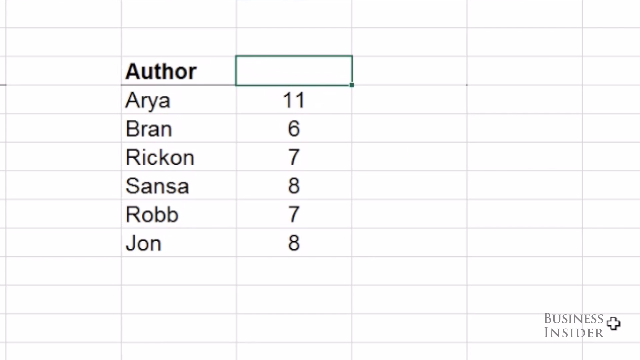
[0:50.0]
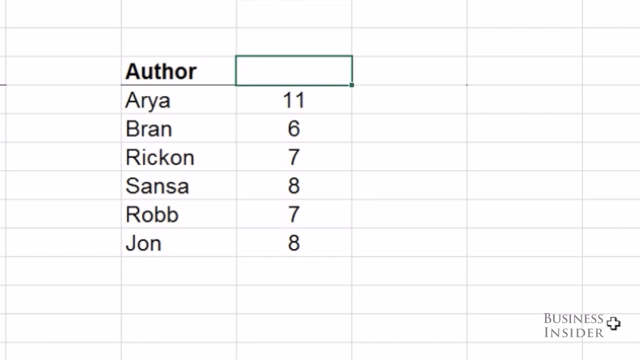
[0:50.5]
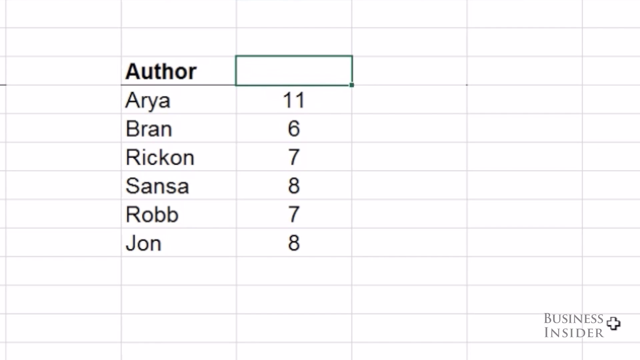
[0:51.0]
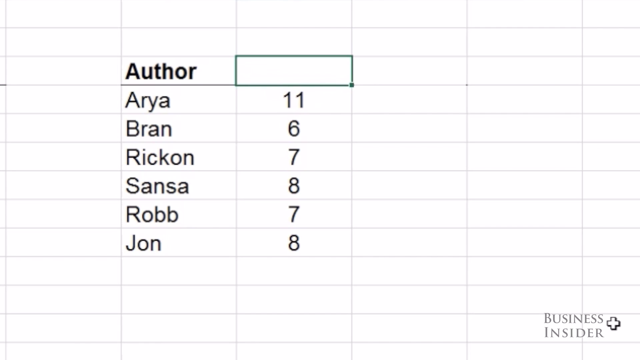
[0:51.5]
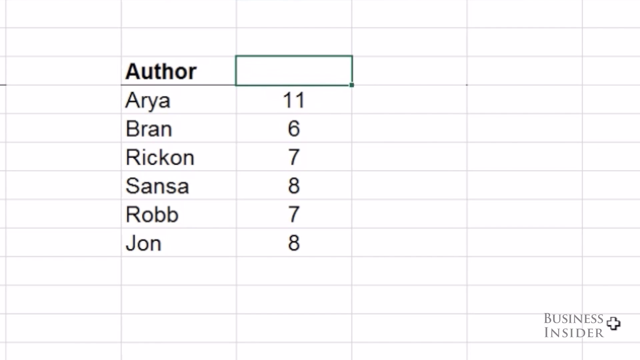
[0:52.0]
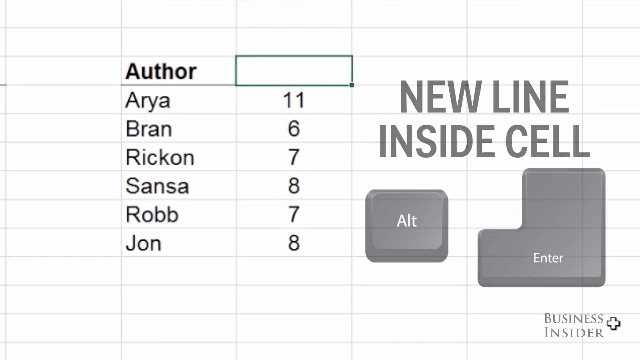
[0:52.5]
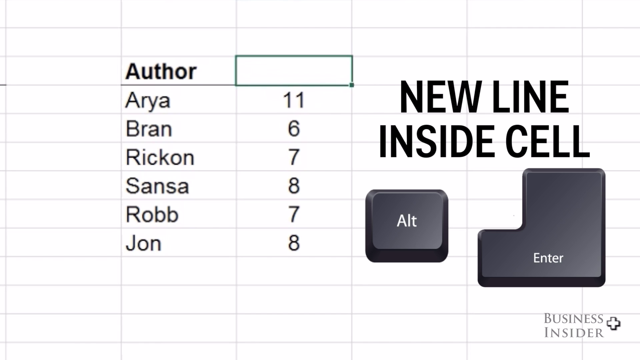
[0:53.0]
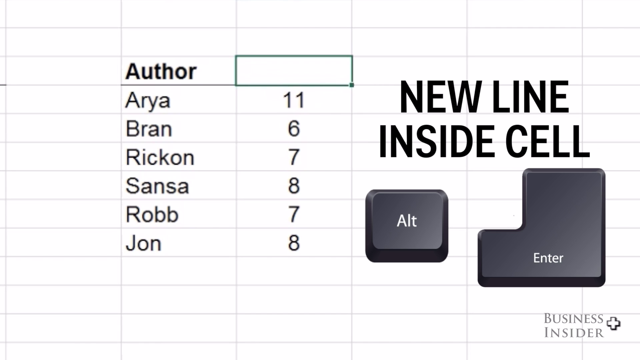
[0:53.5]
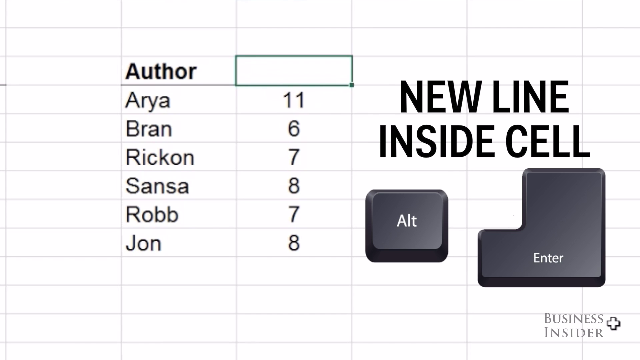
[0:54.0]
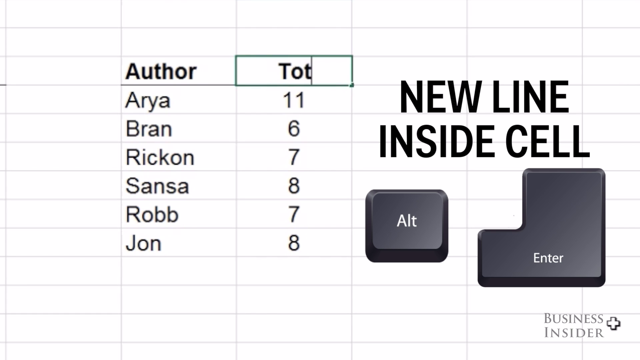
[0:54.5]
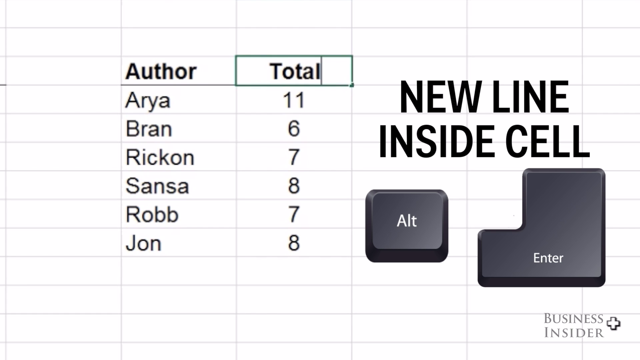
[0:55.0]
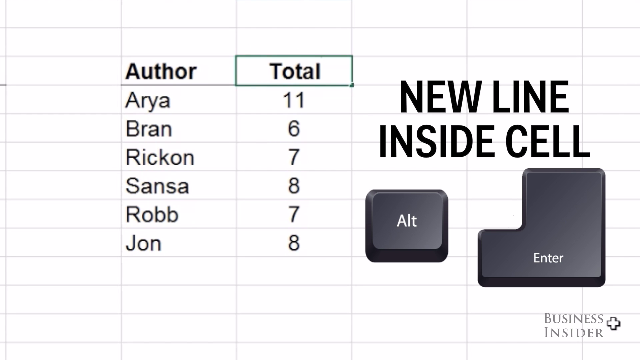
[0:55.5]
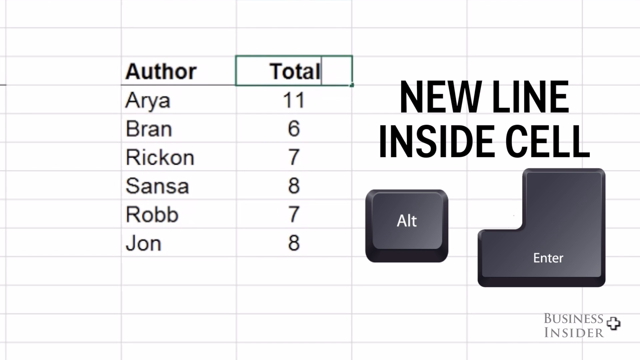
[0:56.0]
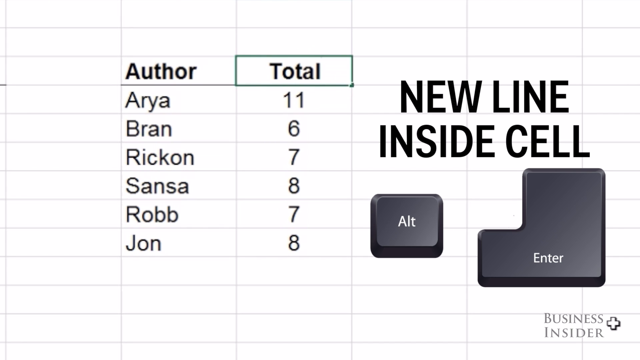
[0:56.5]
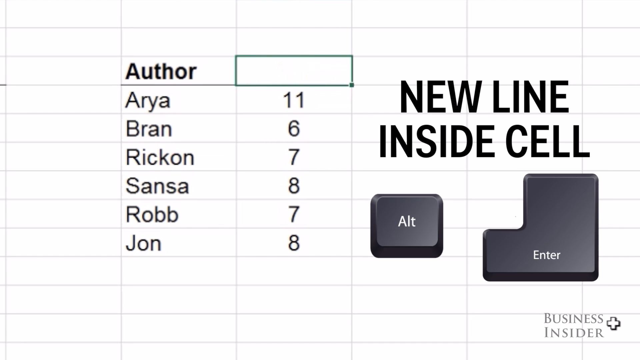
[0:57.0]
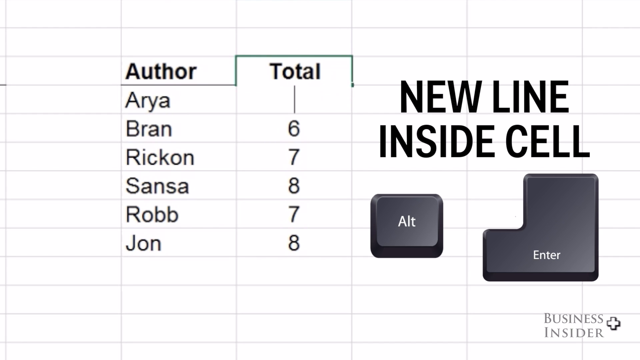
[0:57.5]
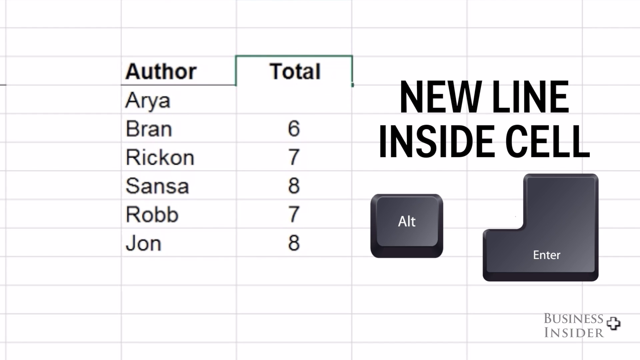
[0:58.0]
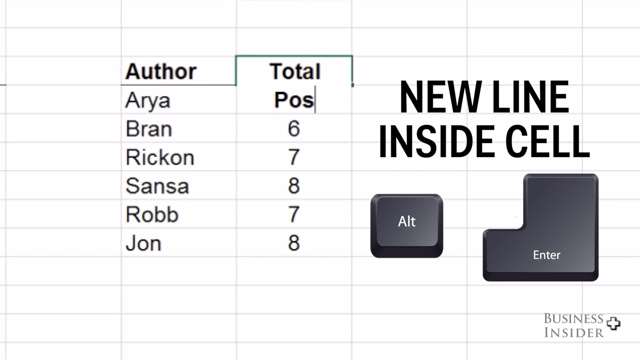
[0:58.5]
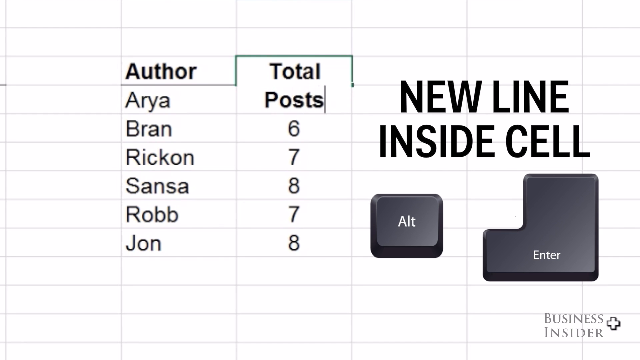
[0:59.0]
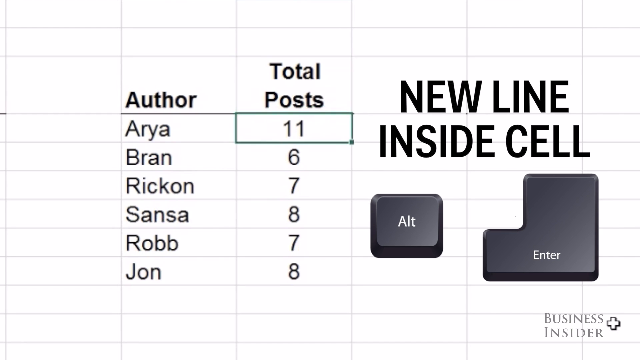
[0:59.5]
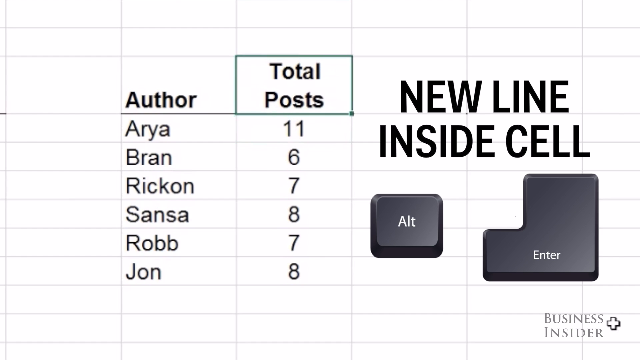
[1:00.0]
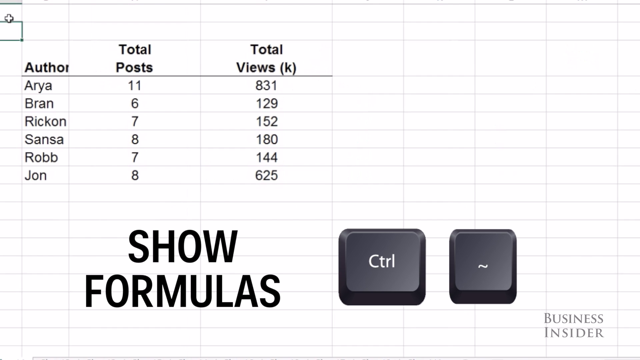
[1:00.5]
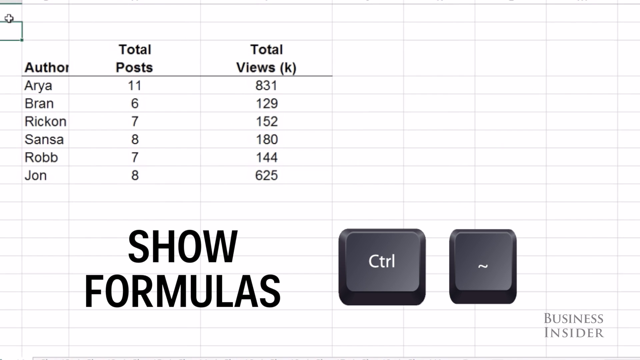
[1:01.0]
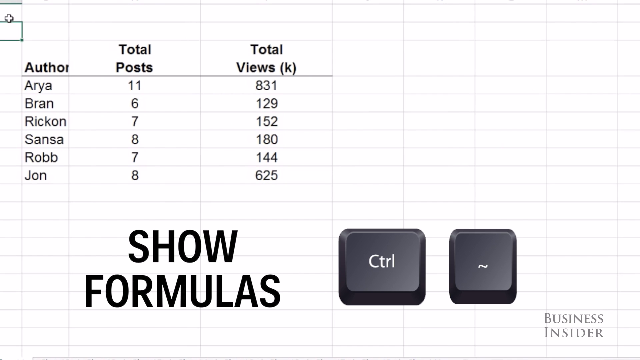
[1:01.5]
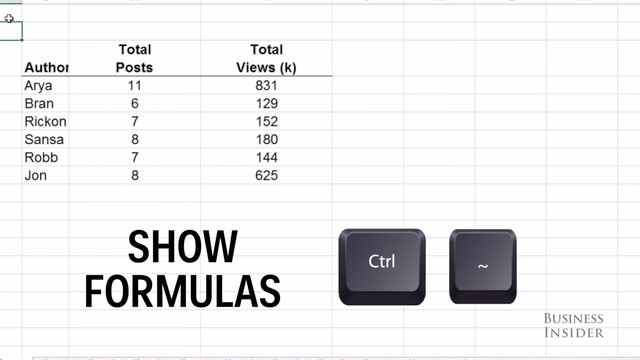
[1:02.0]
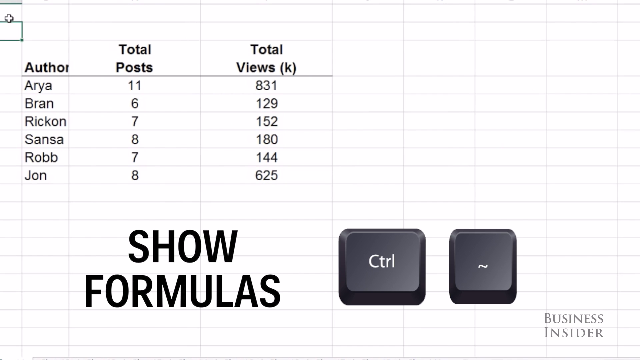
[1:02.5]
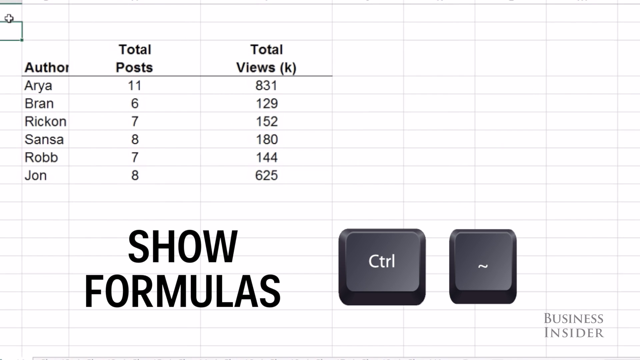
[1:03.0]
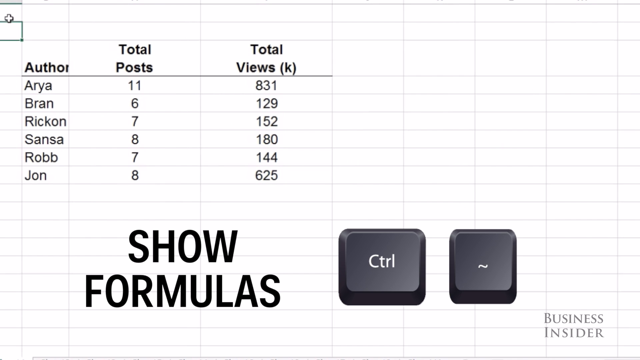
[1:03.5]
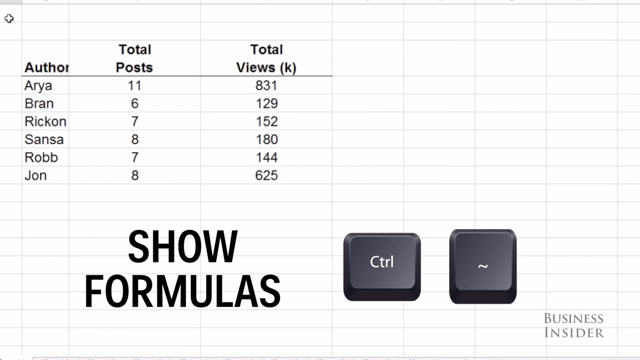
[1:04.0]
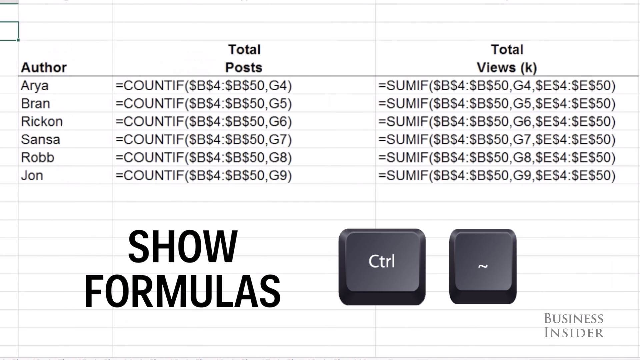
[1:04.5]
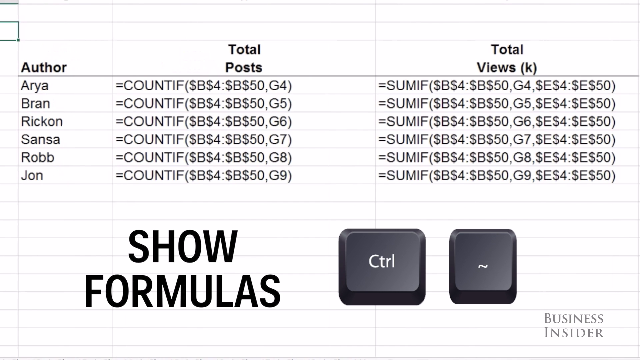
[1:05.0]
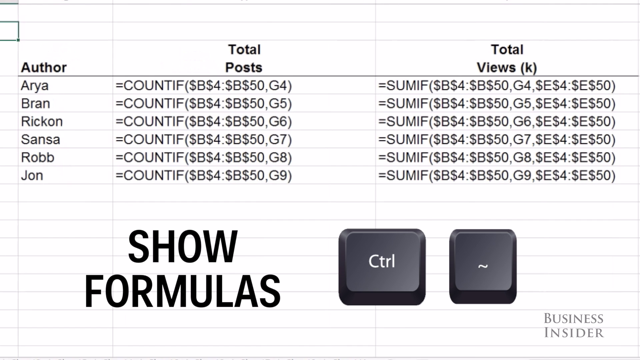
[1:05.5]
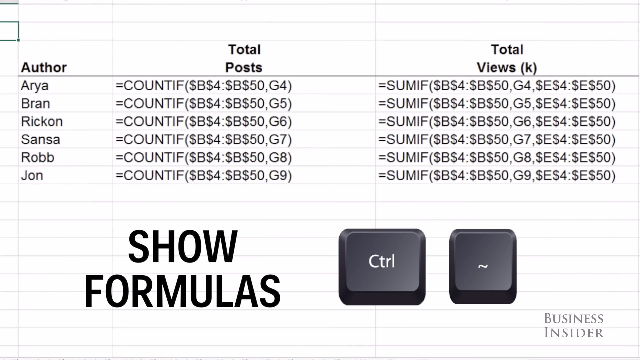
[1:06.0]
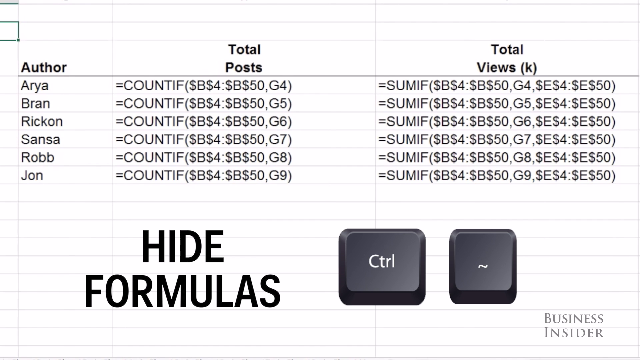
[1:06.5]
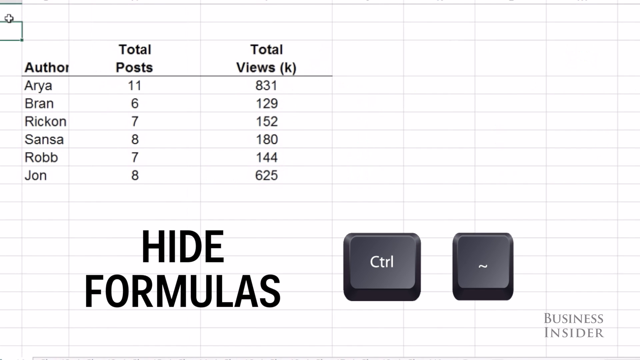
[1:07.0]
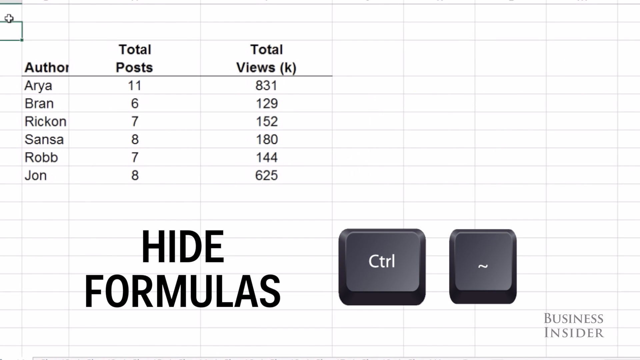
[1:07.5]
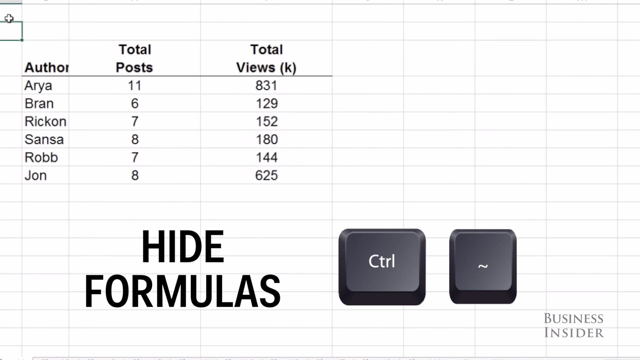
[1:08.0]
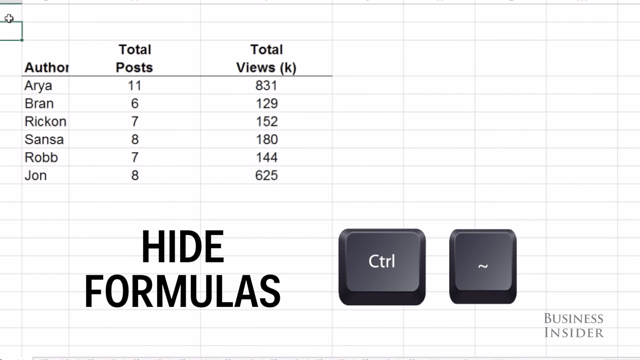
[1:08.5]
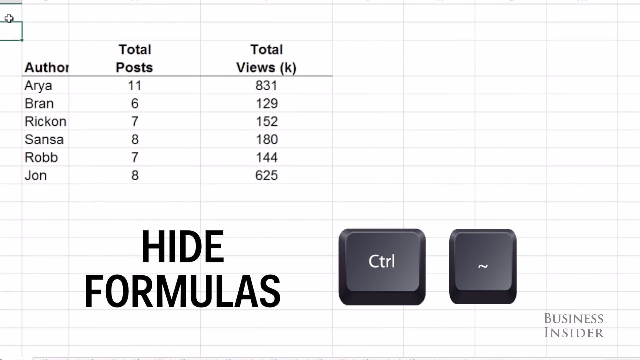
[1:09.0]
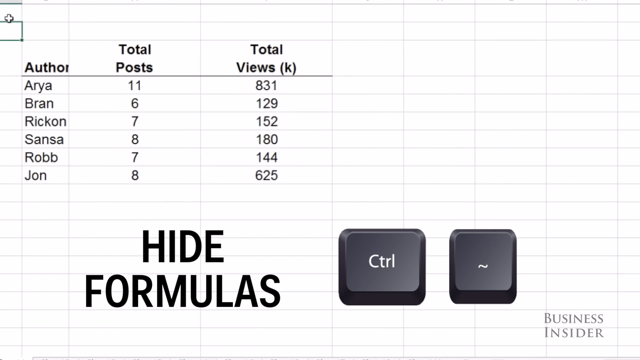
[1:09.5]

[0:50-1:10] What looks like a zoomed-in area of an Excel spreadsheet is shown, with different areas apparently filled in with information. One area says "Author" with names listed, and beside them are different numbers in different boxes. The text "New line inside cell" pops up along with different computer keys. Beside the word "Author," the word "total" is added, which then changes to "total post." The view then moves to a different Excel spreadsheet screen showing more information, with author, total post and total views listed. At the bottom of the screen "Show formulas" appears with the keys to use, followed by "Hide formulas," again with keys to use on the computer.